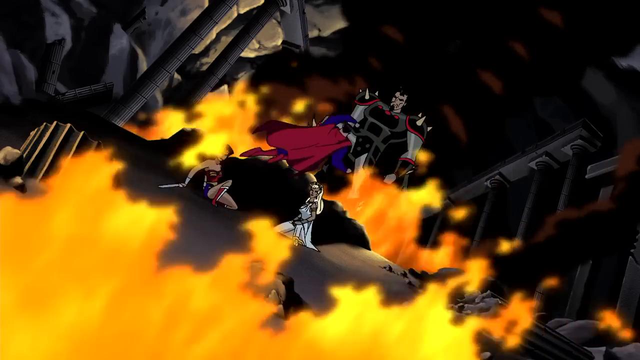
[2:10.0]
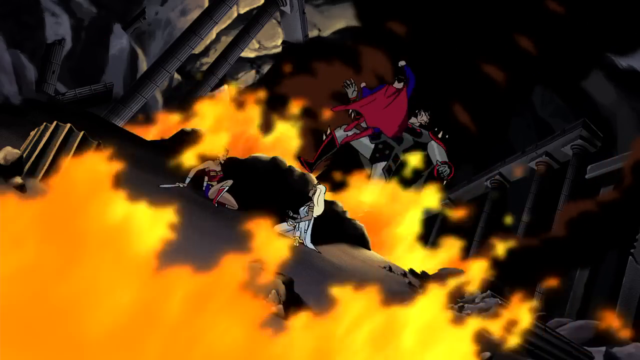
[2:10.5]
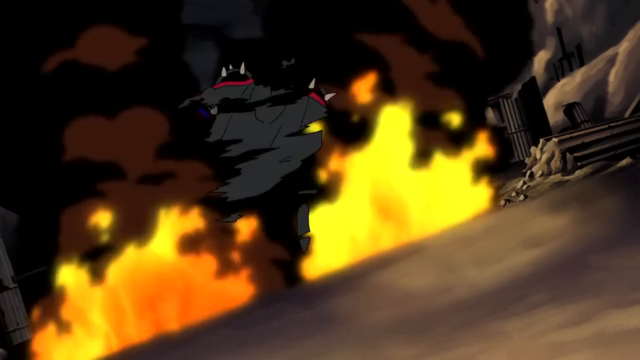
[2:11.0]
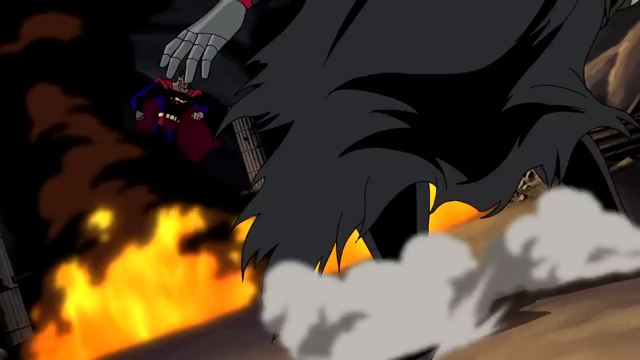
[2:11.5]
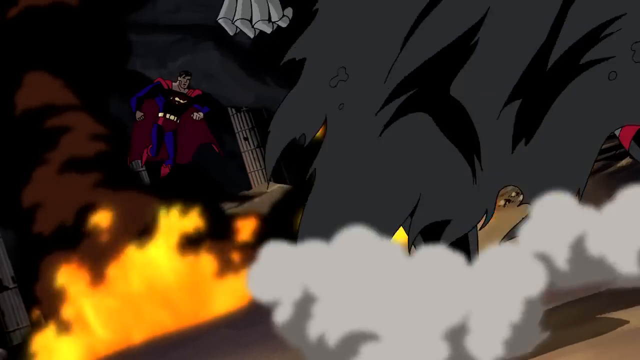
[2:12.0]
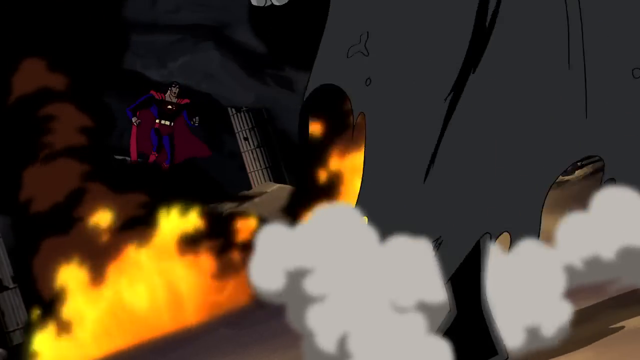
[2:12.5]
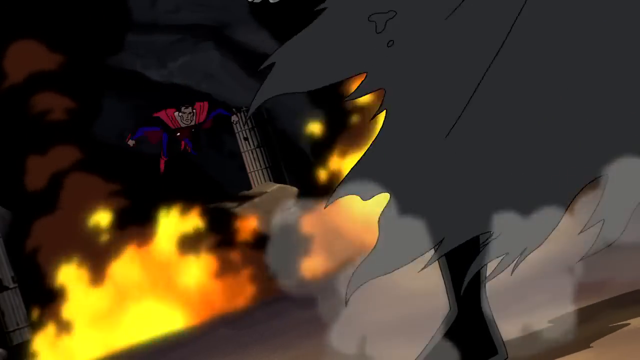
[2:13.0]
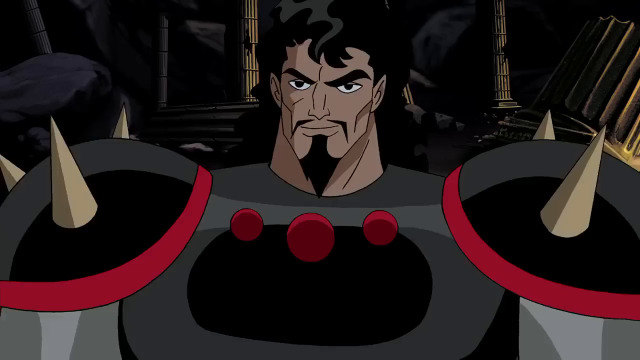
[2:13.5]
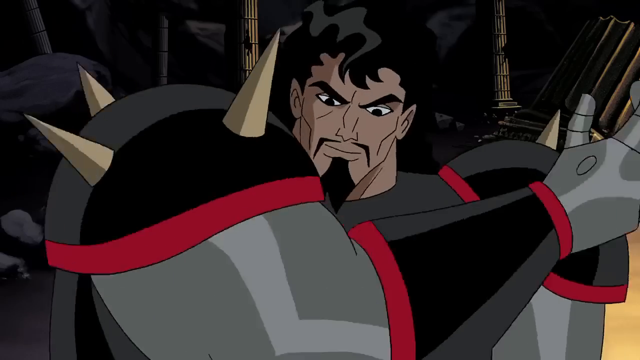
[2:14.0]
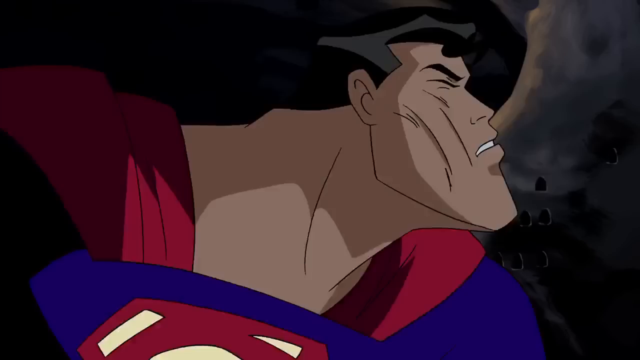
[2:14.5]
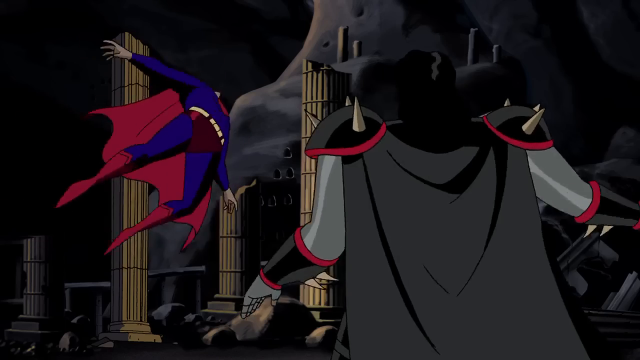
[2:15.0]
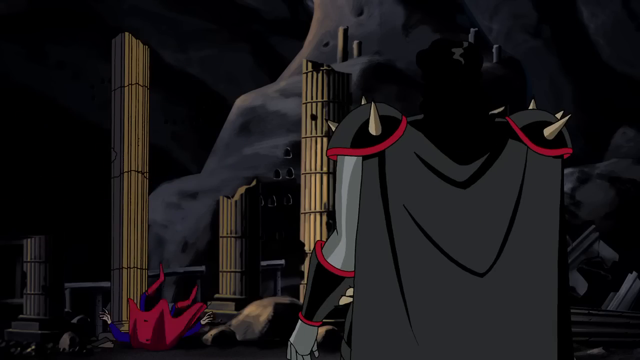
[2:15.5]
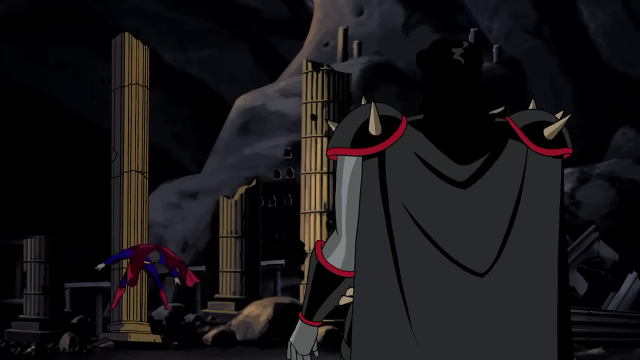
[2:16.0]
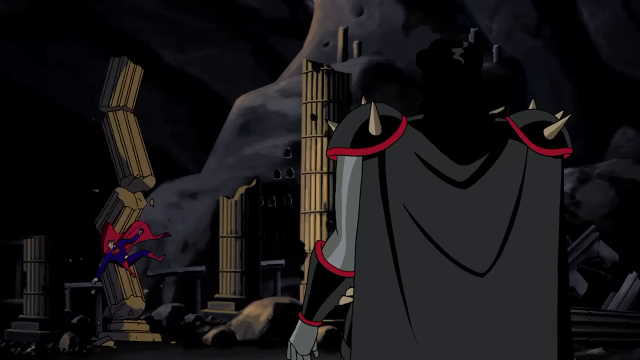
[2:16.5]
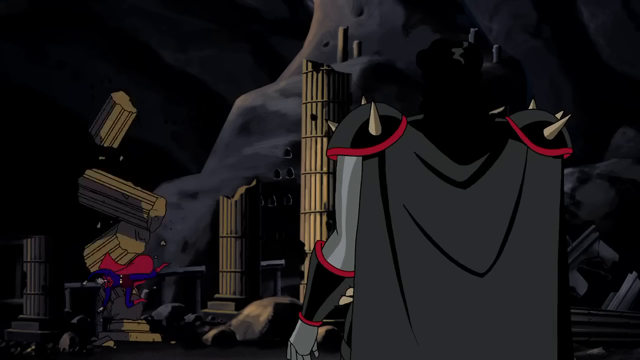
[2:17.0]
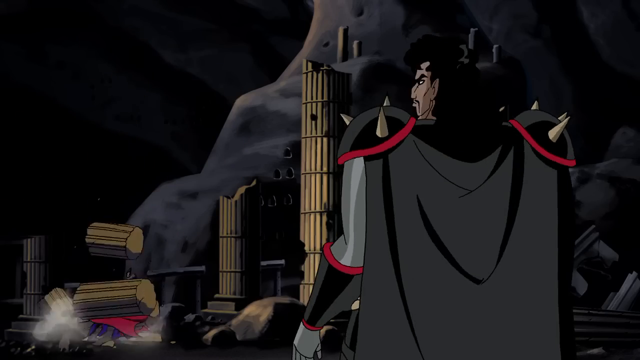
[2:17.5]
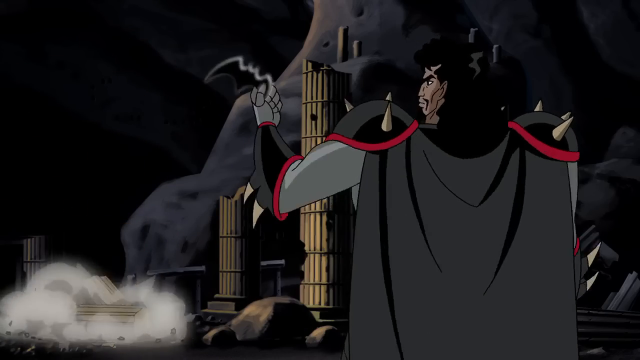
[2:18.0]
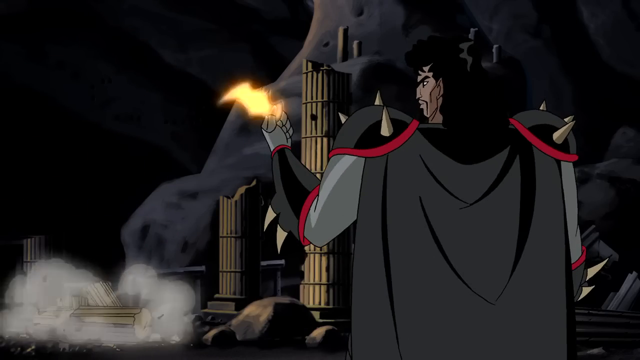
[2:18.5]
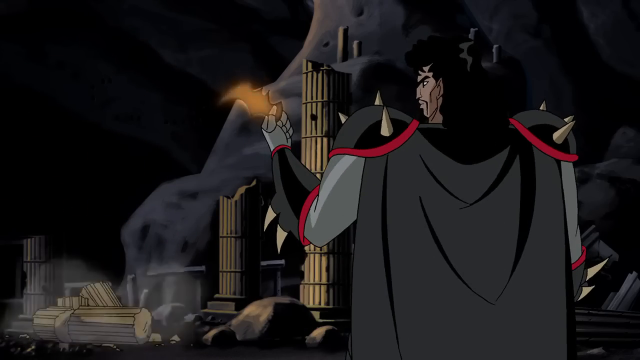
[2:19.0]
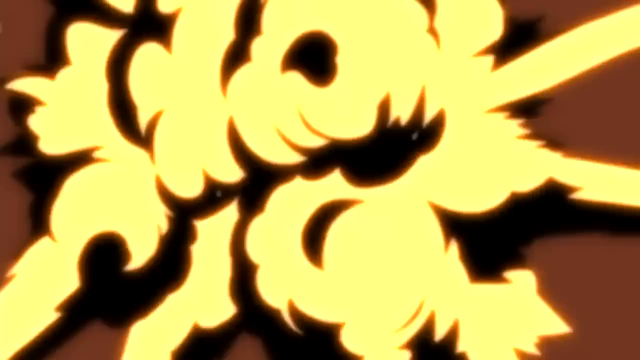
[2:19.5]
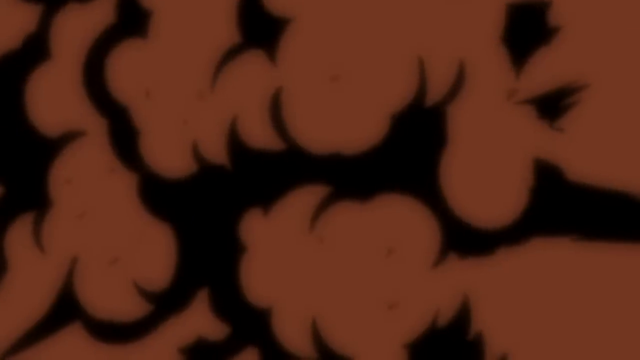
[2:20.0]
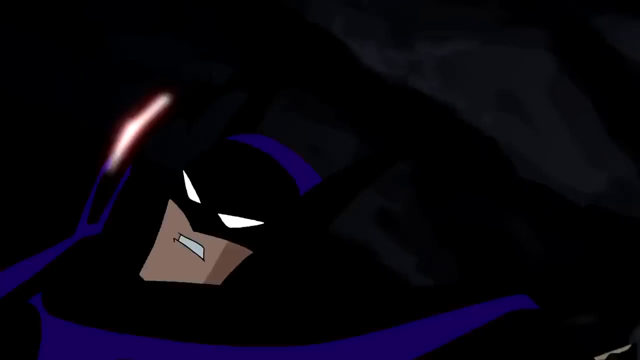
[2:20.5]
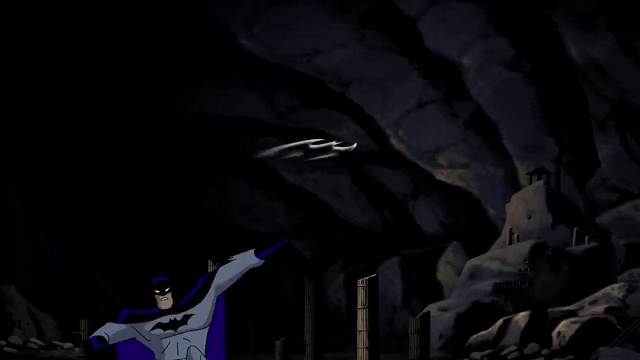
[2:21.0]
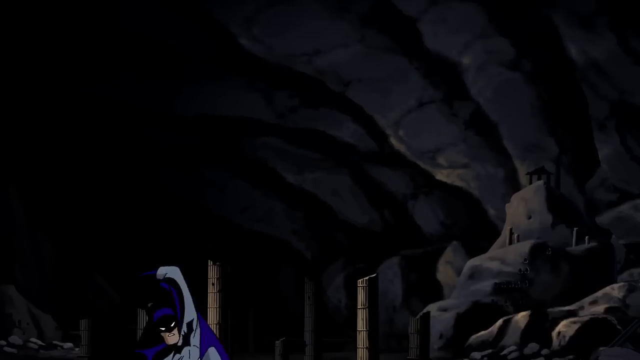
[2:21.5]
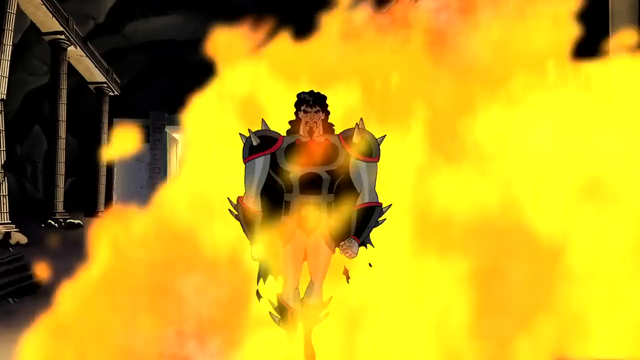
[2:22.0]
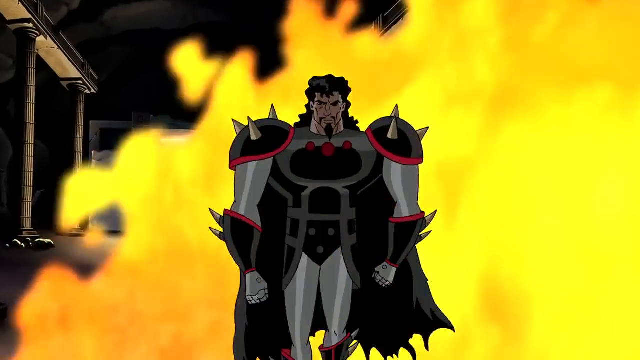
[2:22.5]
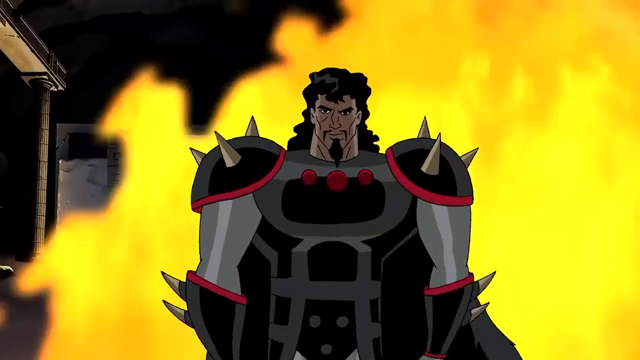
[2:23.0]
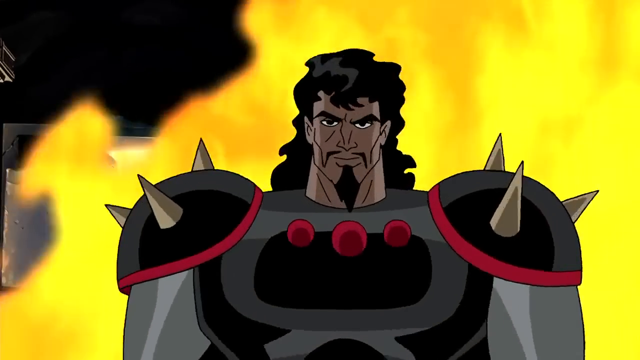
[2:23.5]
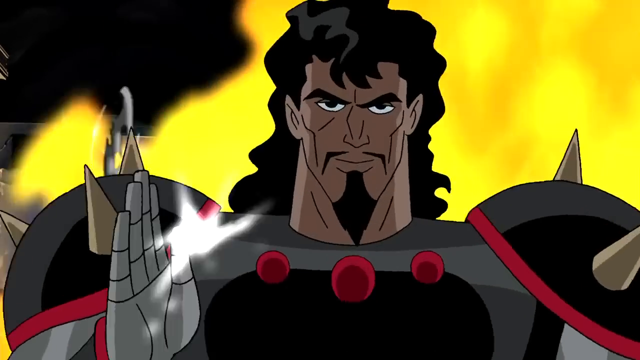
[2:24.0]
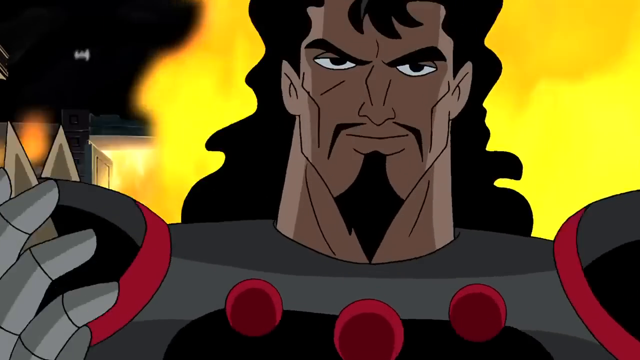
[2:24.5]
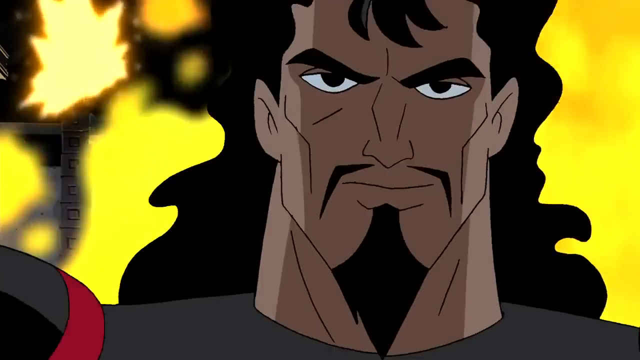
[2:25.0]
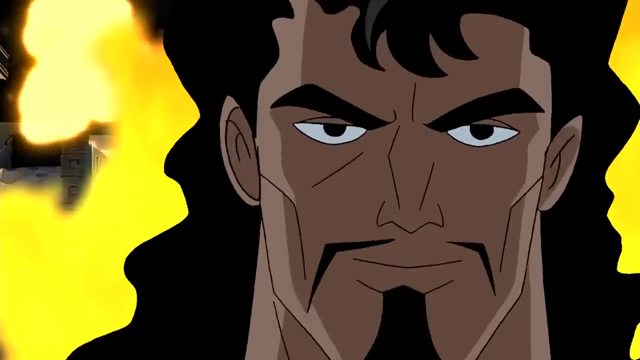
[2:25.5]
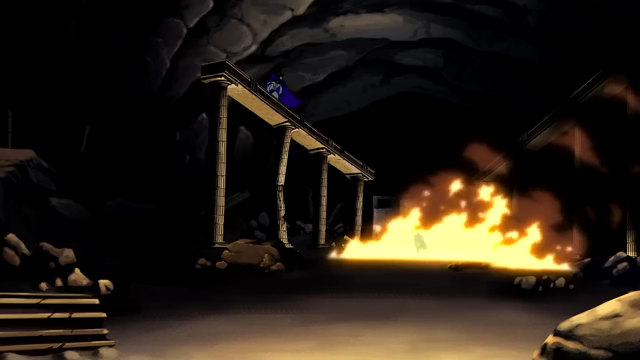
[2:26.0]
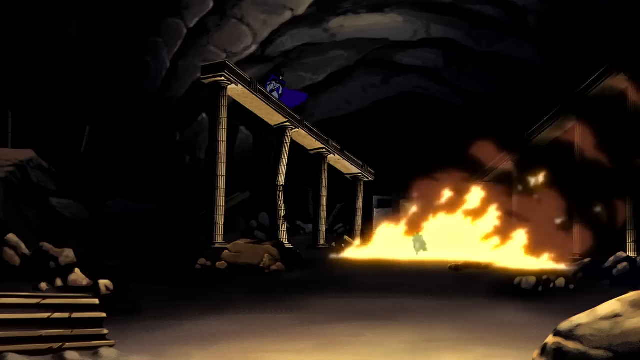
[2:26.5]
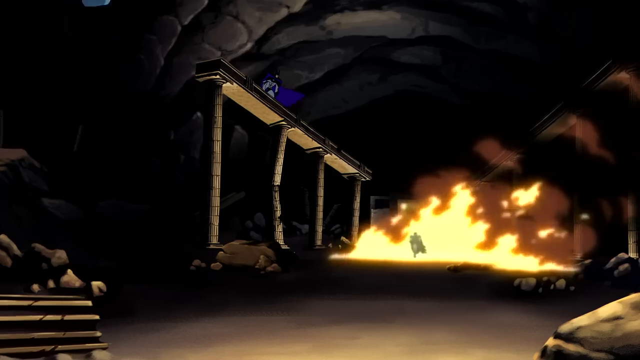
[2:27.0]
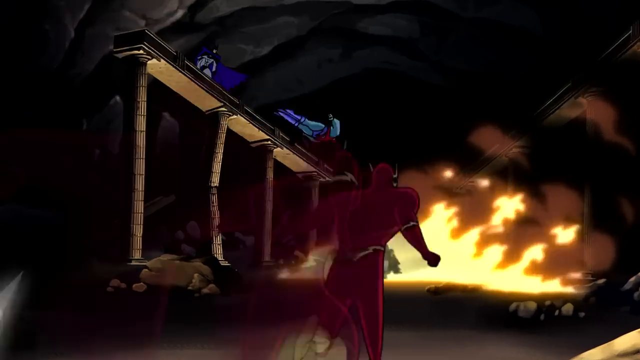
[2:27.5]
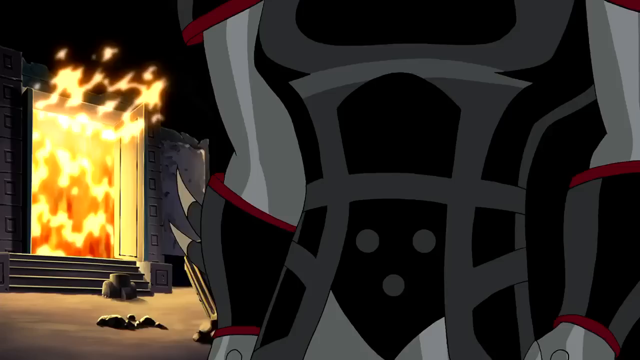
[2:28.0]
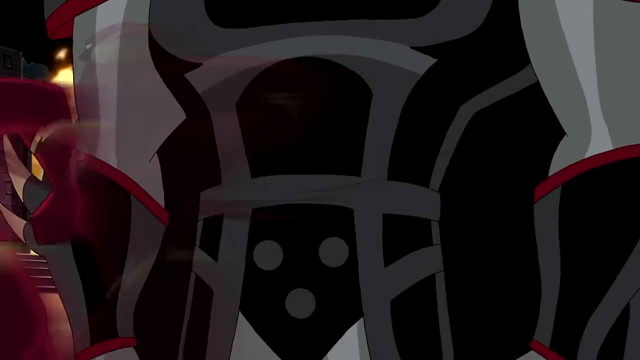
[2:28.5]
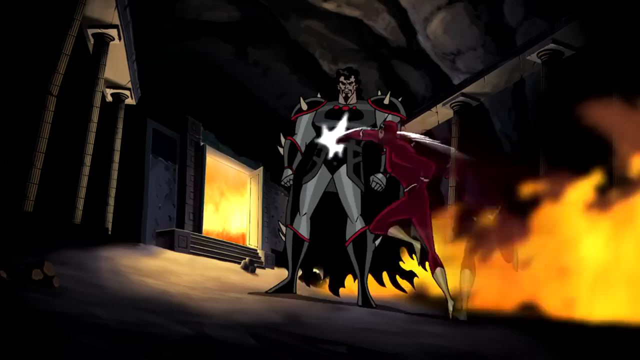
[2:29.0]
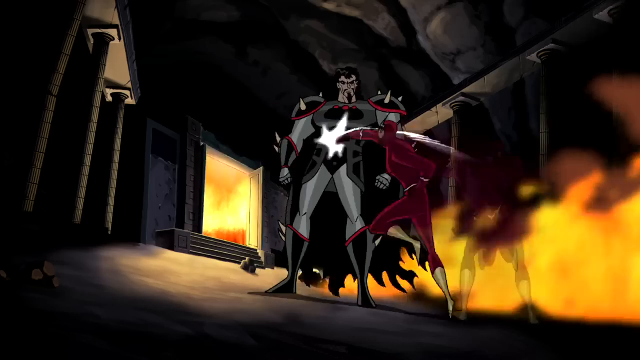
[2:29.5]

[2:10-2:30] The large muscular character in the black, gray and red outfit stands over the women, over Wonder Woman on the left side of the screen. She is sitting down with both legs bent at the knee, holding her sword in her right hand. Her right foot is planted on the ground beneath her, and her left leg looks bent at the knee but seems to hang down in front of her. The woman she freed kneels next to one of the large boulders. Bright yellow and orange fire blazes all around them. Superman then enters the screen and tries to attack the villain, but the villain slaps him back with a backhand. Superman flies across the screen into the wall, his back hits it, and he slides down the wall.